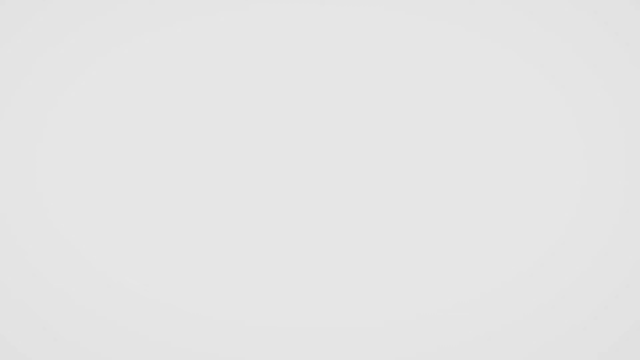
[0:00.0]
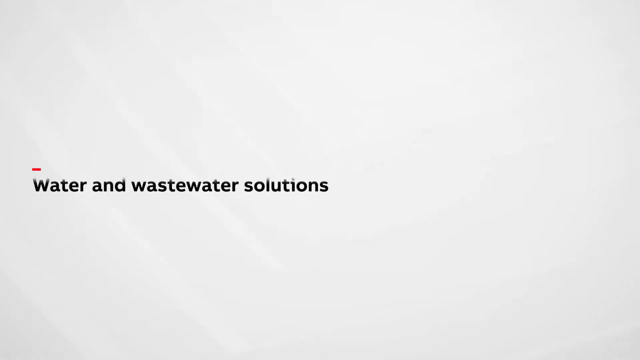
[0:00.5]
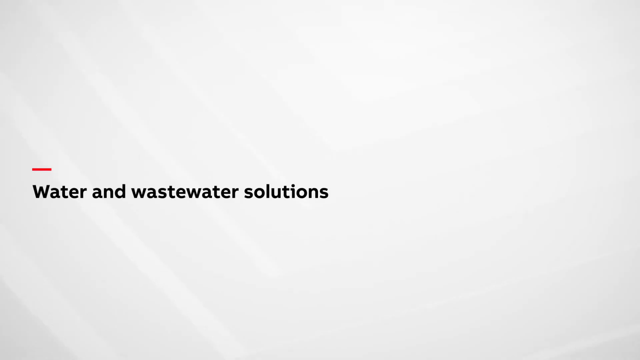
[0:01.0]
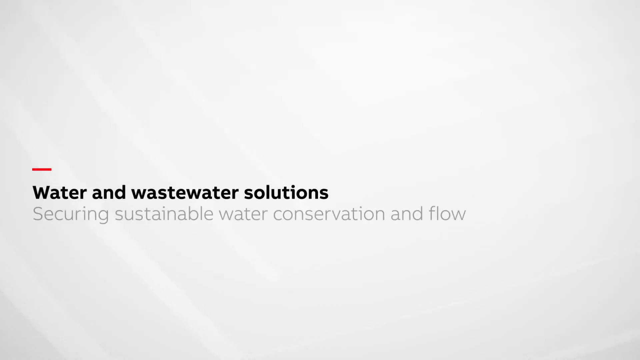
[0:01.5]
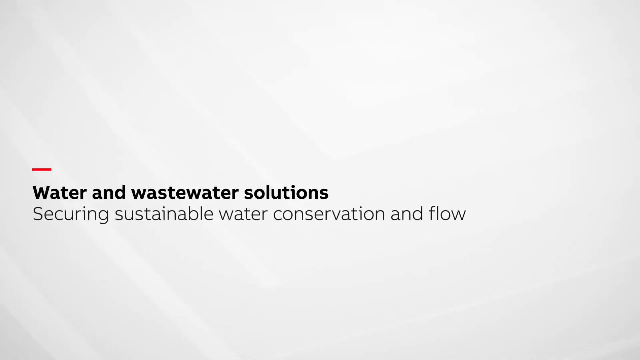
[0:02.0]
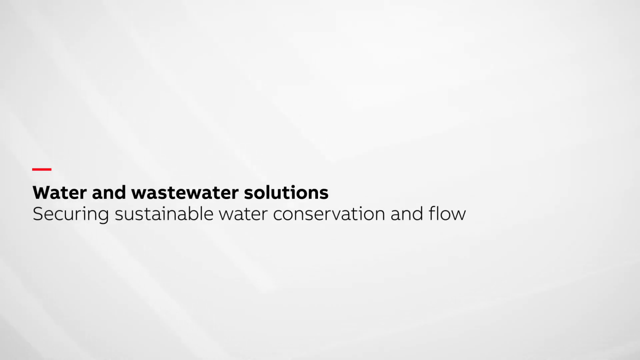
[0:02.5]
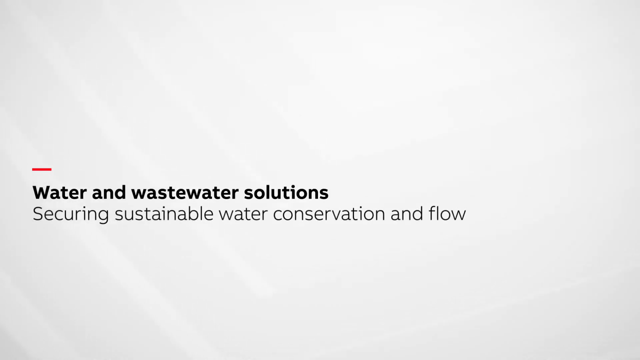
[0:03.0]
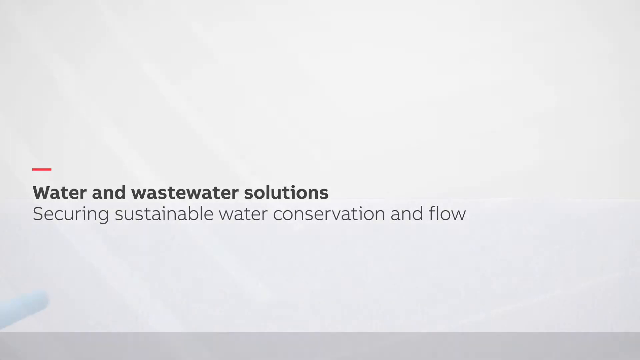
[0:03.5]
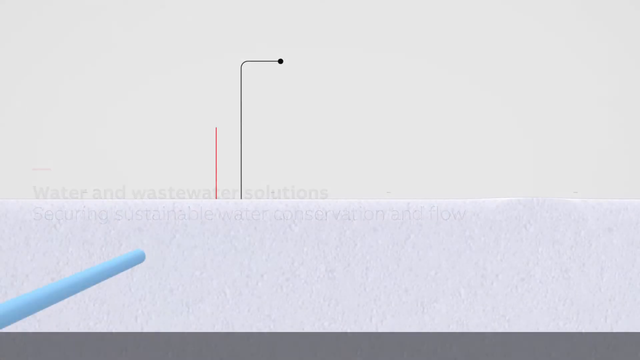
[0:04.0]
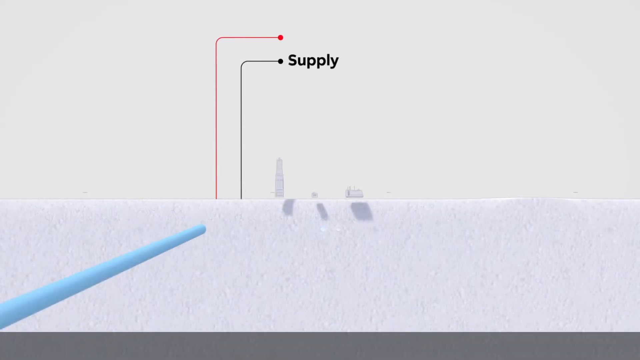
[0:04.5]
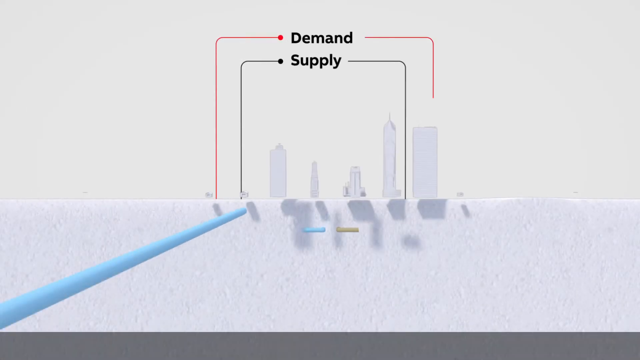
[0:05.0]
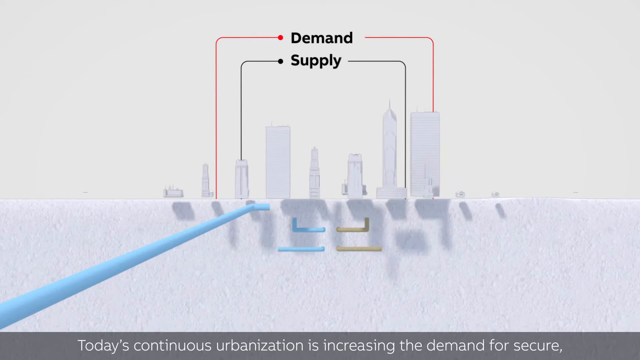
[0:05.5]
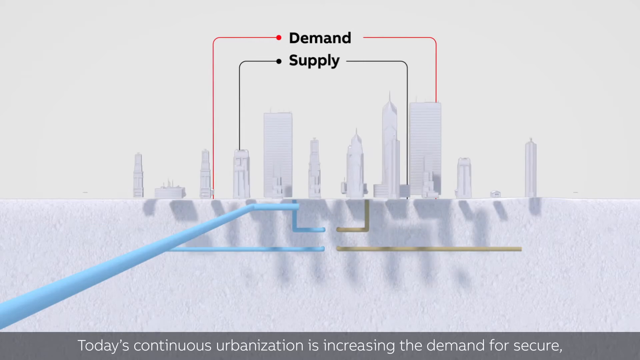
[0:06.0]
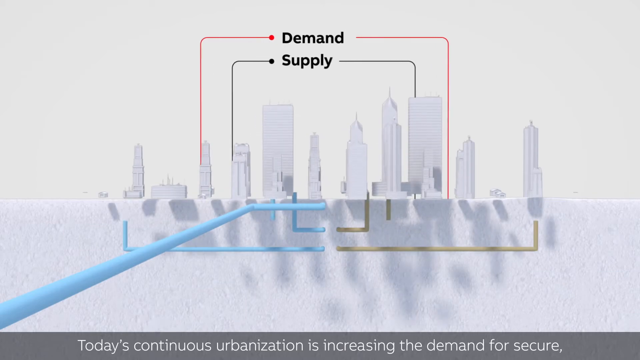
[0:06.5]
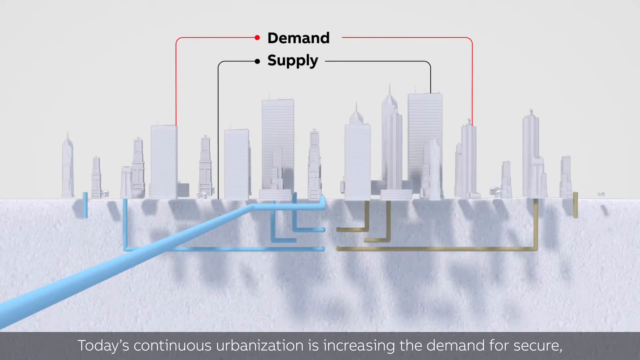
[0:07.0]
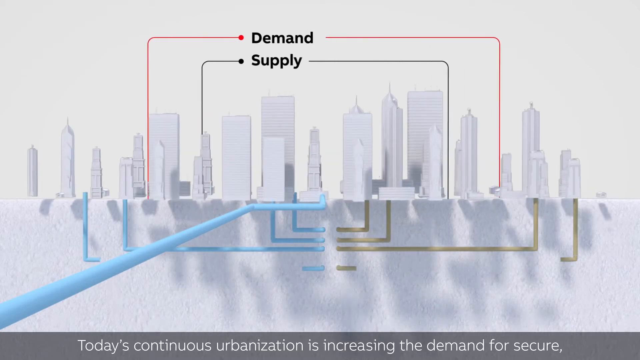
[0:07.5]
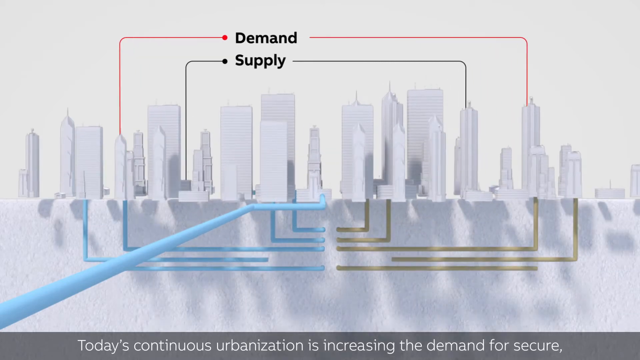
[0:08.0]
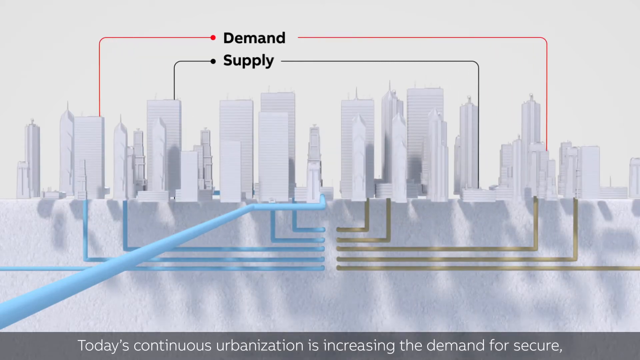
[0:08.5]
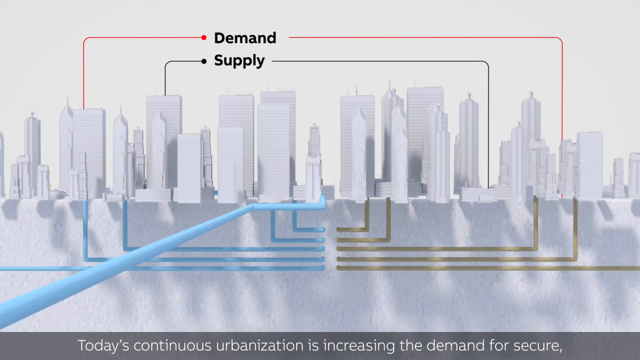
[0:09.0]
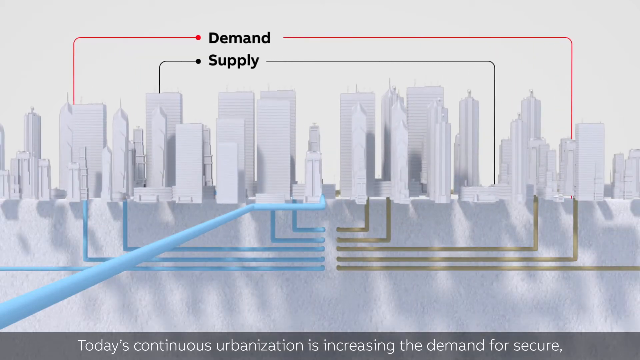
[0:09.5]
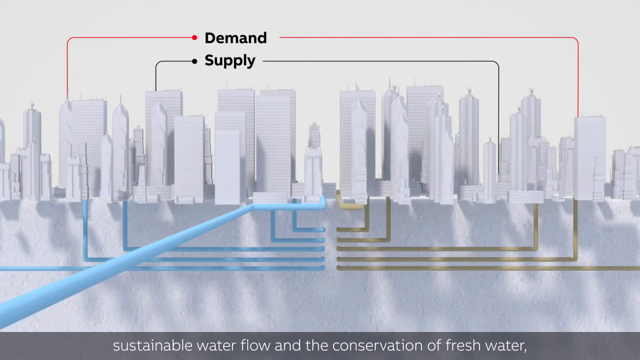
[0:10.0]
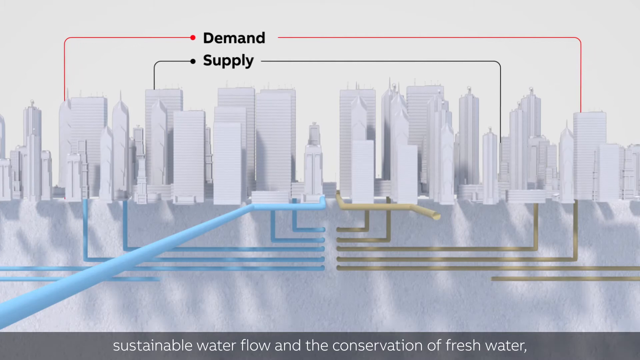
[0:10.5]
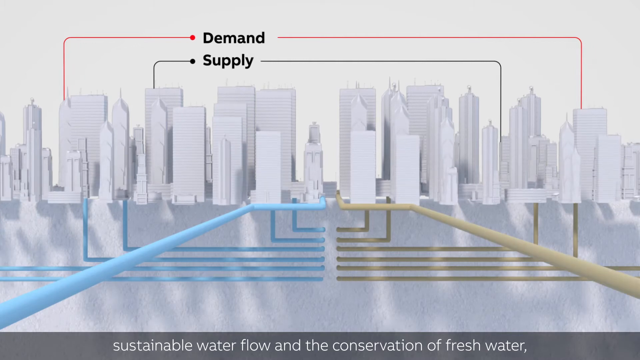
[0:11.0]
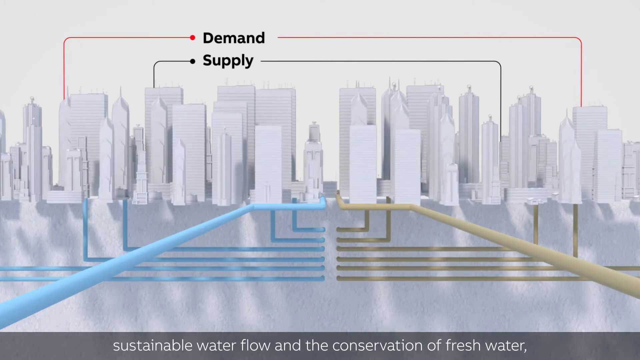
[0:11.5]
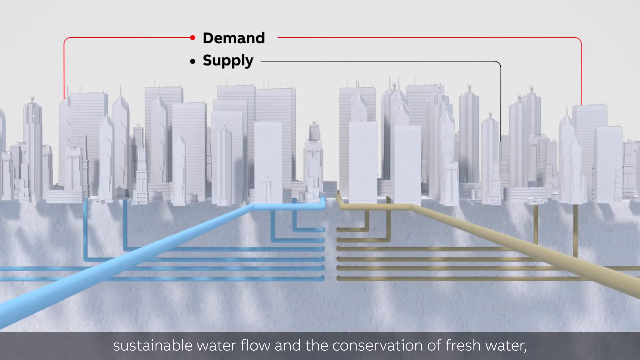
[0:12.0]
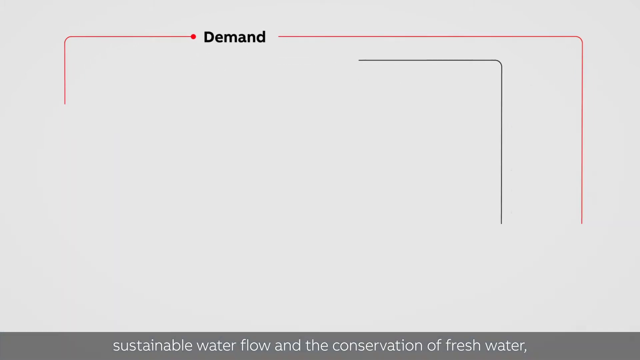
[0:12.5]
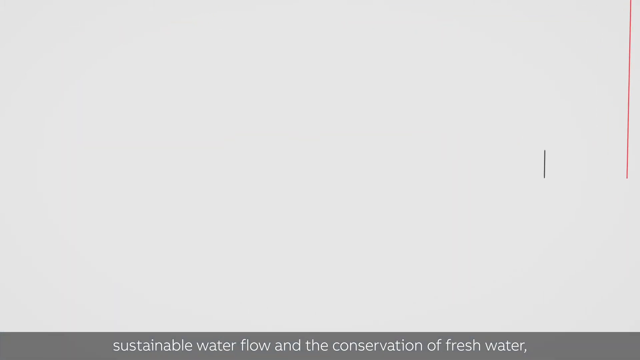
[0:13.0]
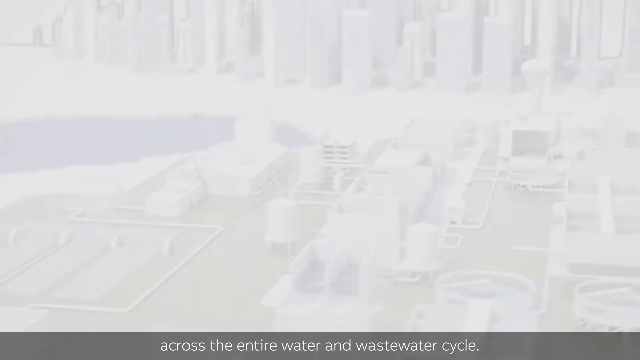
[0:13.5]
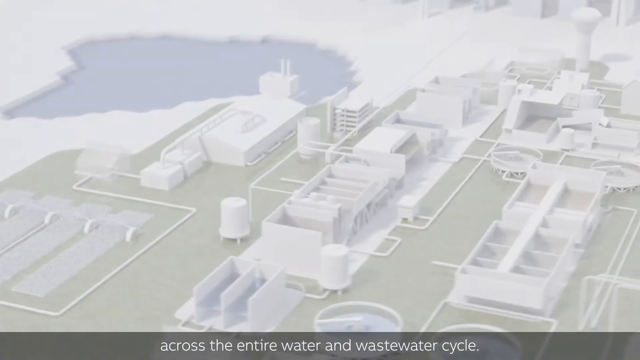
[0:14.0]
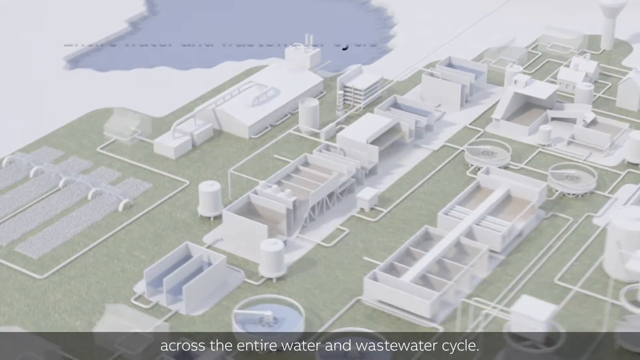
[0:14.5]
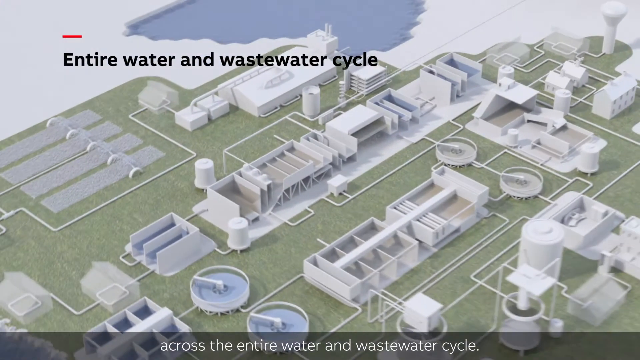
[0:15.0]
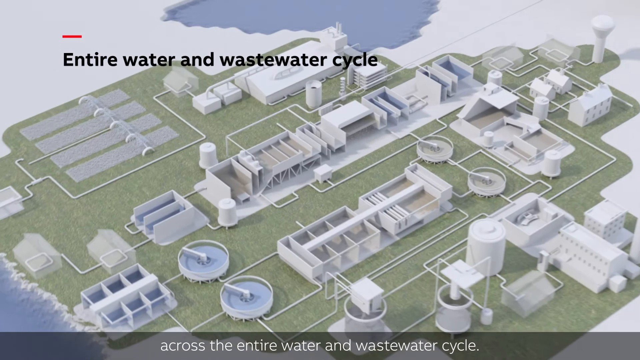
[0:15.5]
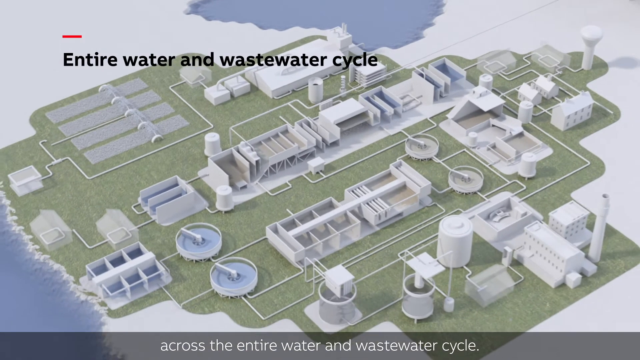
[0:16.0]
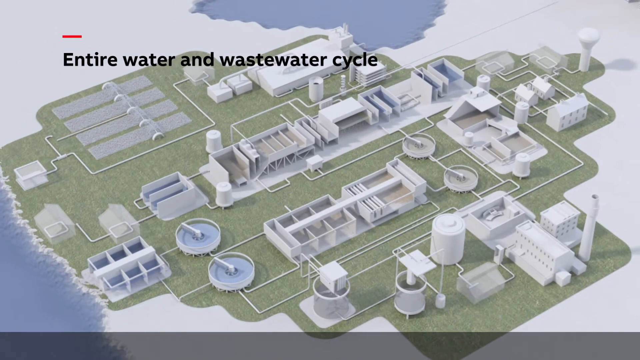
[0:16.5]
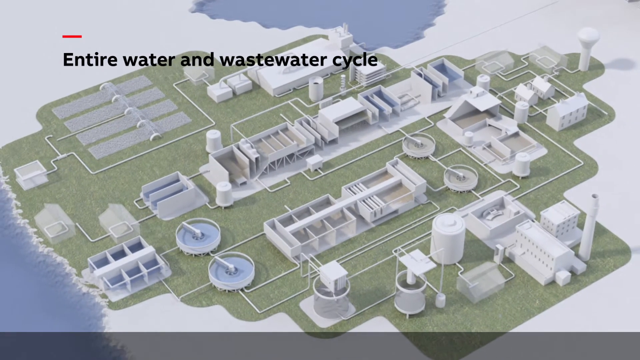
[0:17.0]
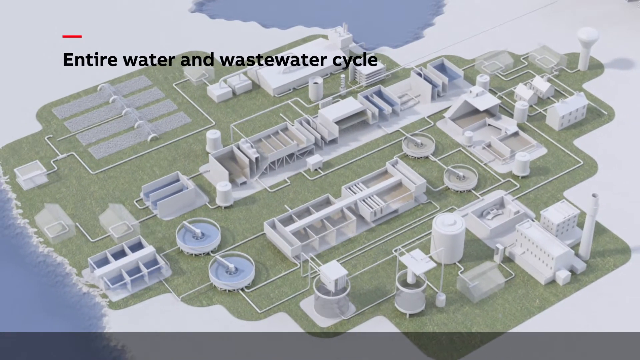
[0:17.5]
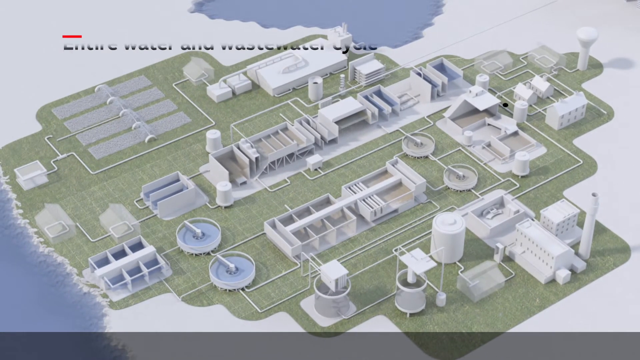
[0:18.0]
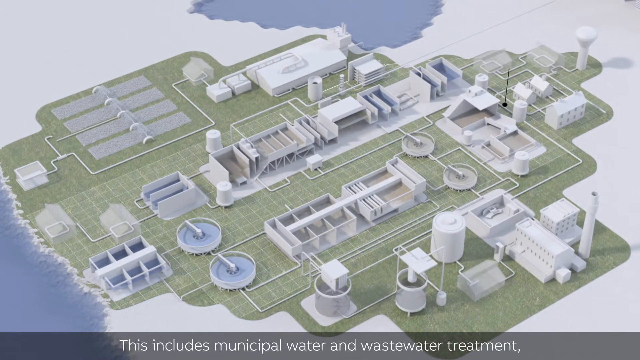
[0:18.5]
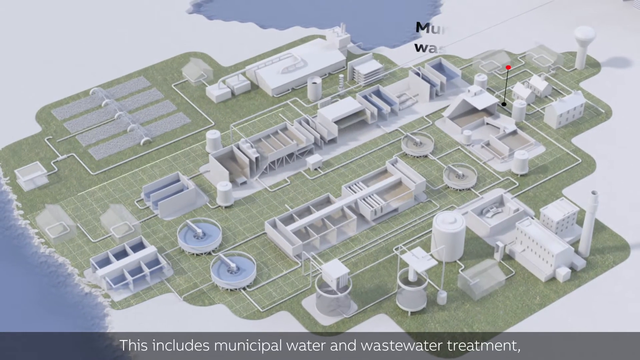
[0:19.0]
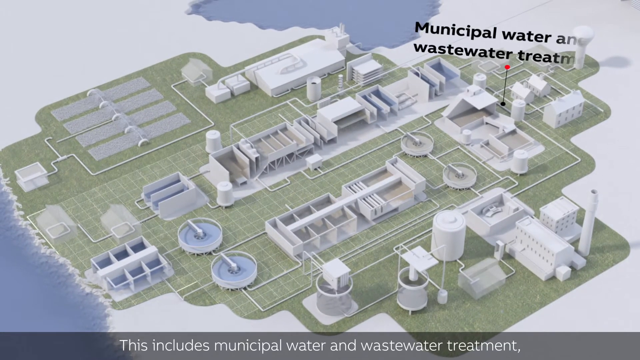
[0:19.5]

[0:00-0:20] A diagram shows an entire water cycle, with a lot of buildings and pipes underground, illustrating how water is supplied. There is a big dam on the side, and many buildings are painted white. No humans, children or trees appear; only white buildings are shown. Some of the pipes are blue. The system seems to bring cleaner water.